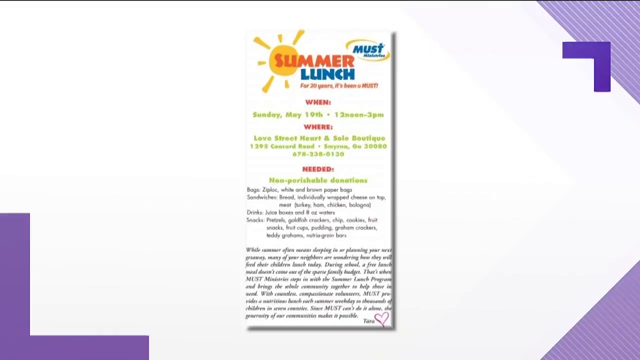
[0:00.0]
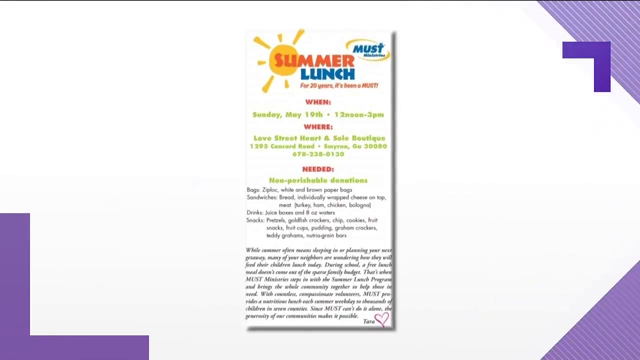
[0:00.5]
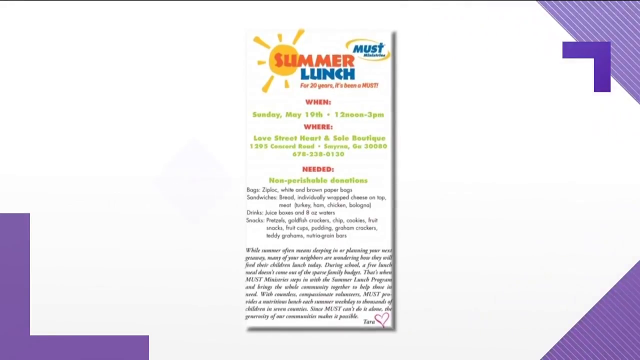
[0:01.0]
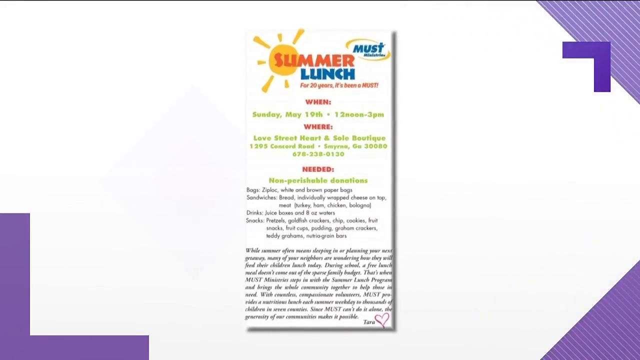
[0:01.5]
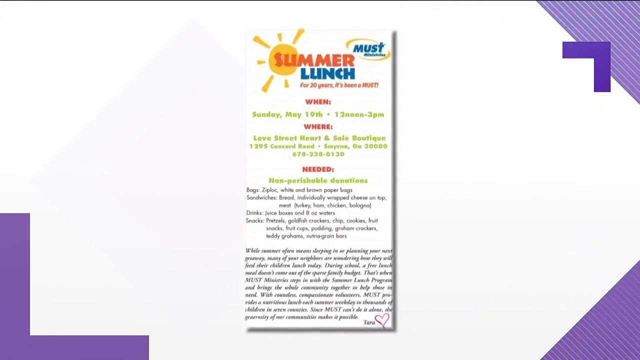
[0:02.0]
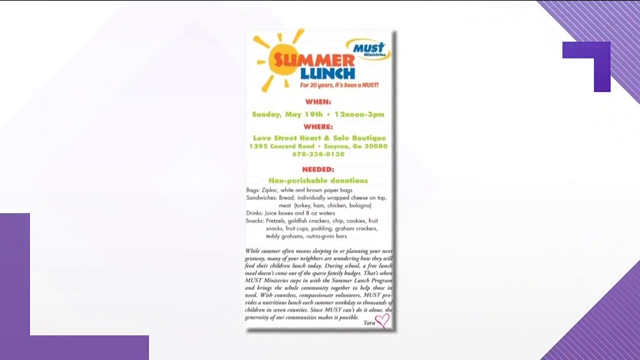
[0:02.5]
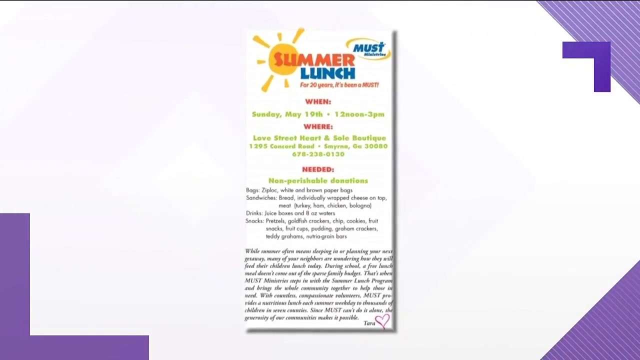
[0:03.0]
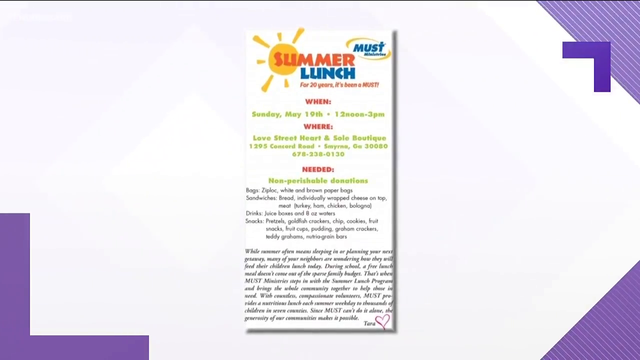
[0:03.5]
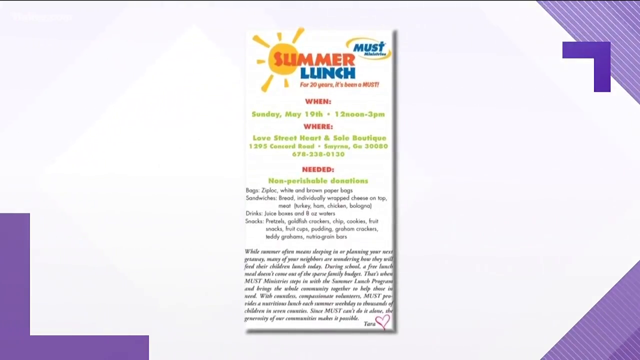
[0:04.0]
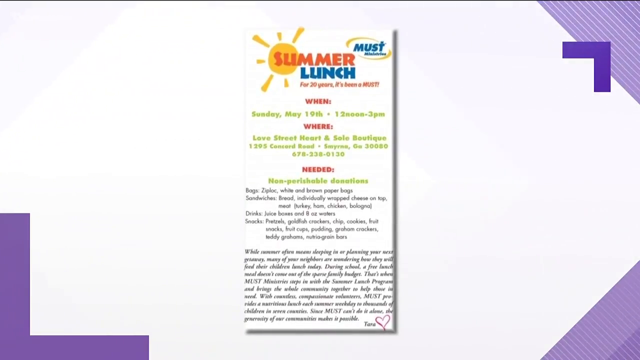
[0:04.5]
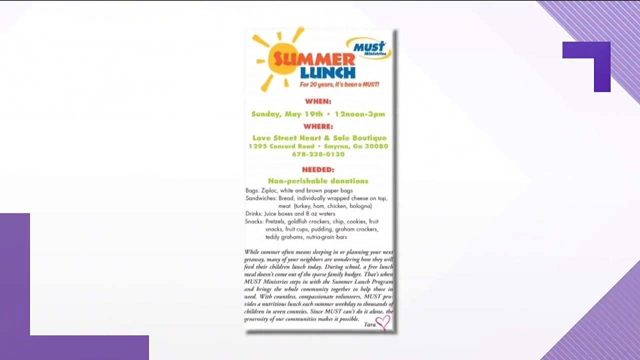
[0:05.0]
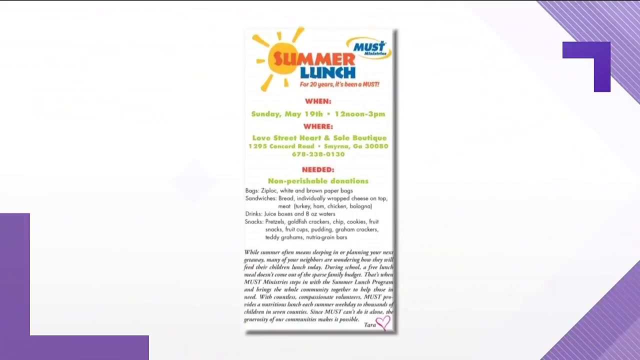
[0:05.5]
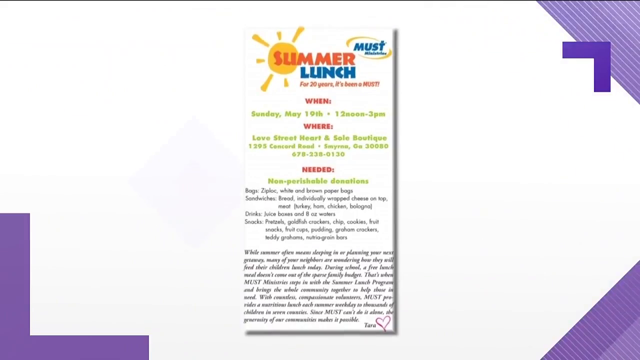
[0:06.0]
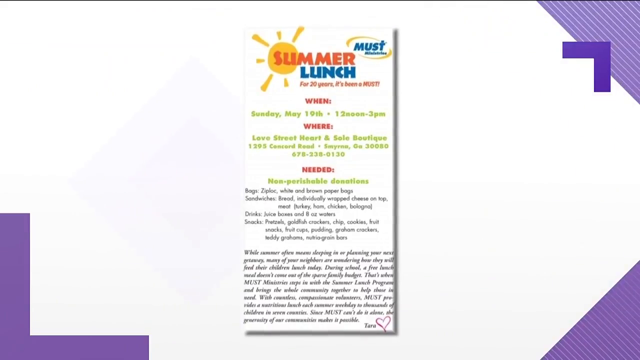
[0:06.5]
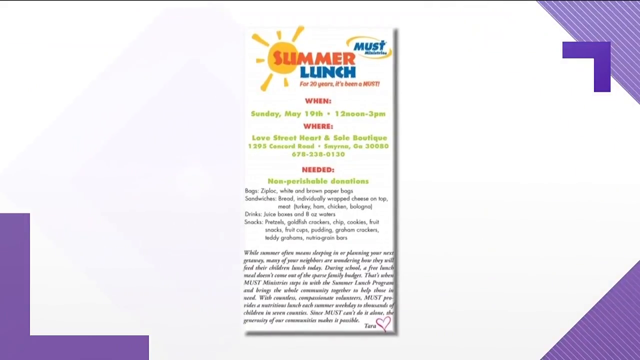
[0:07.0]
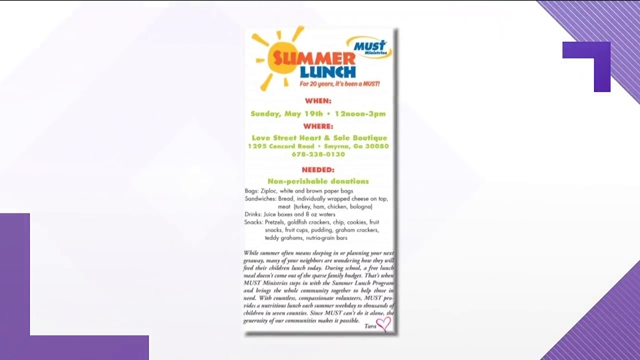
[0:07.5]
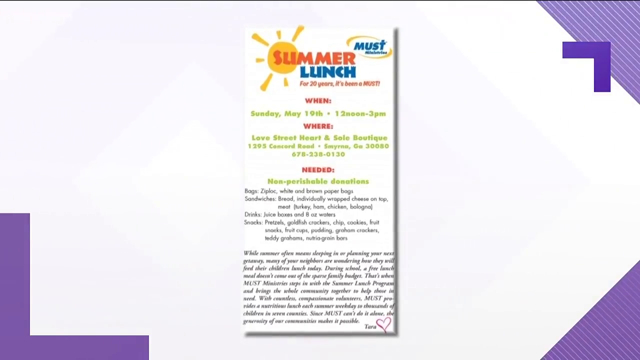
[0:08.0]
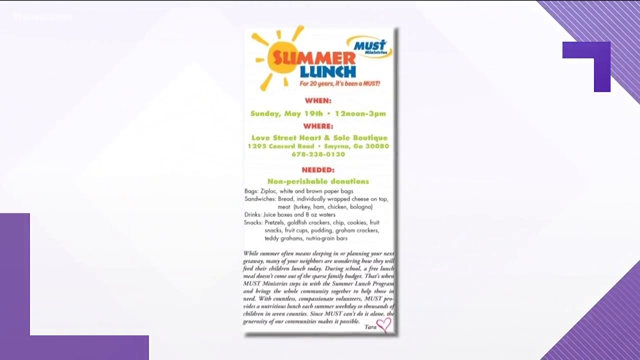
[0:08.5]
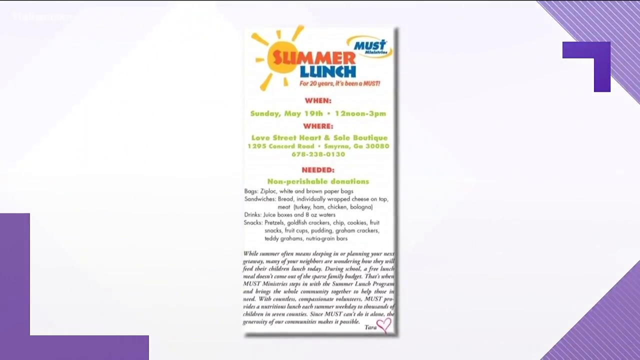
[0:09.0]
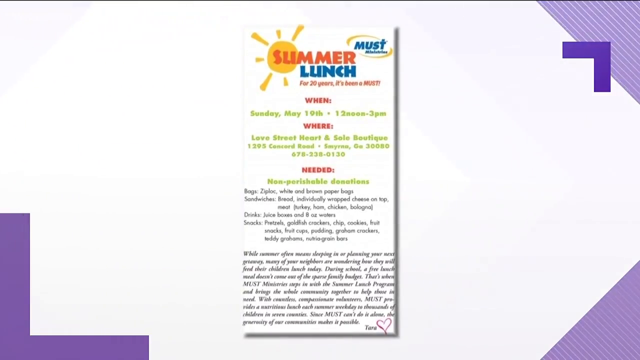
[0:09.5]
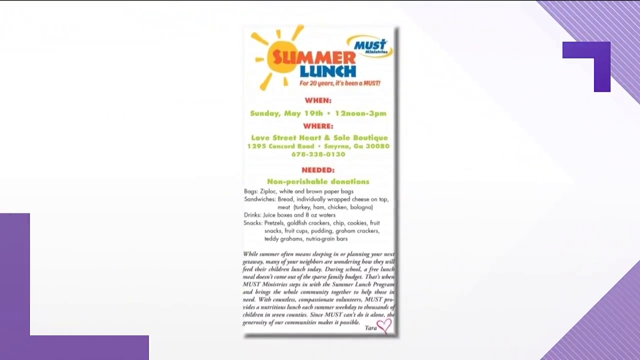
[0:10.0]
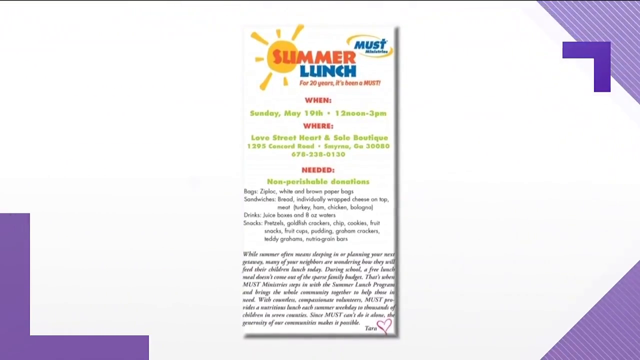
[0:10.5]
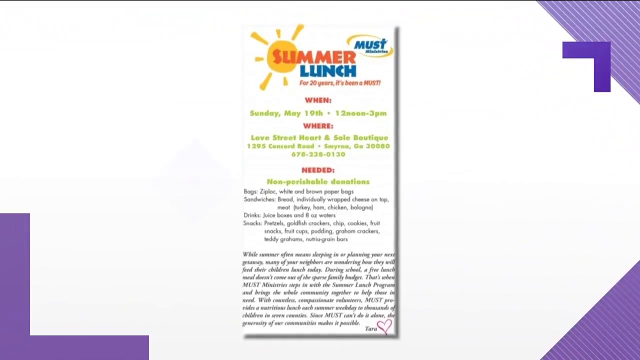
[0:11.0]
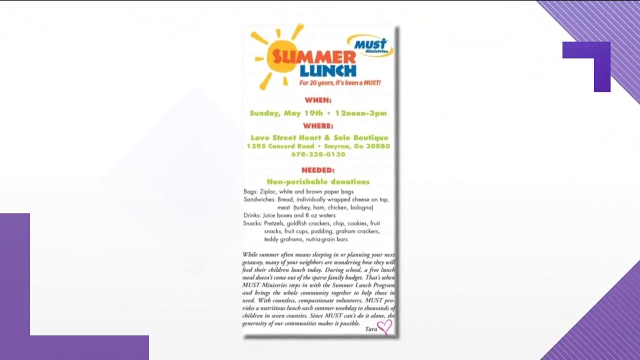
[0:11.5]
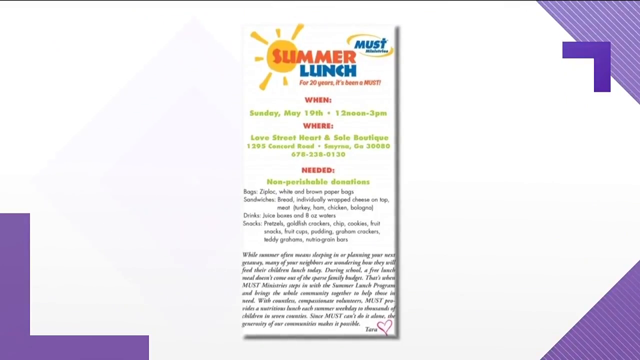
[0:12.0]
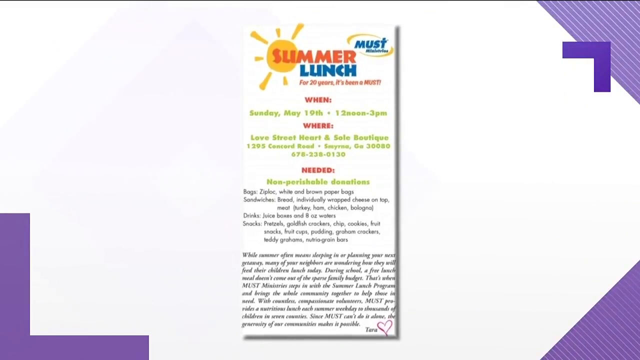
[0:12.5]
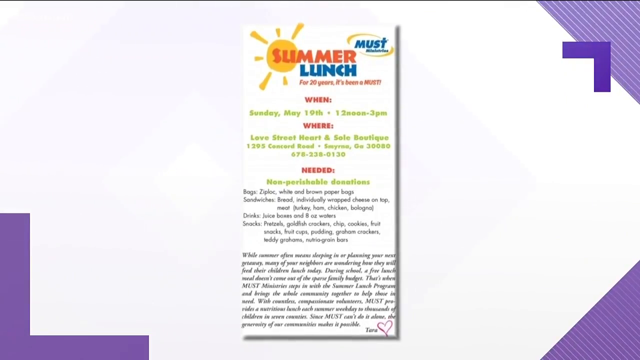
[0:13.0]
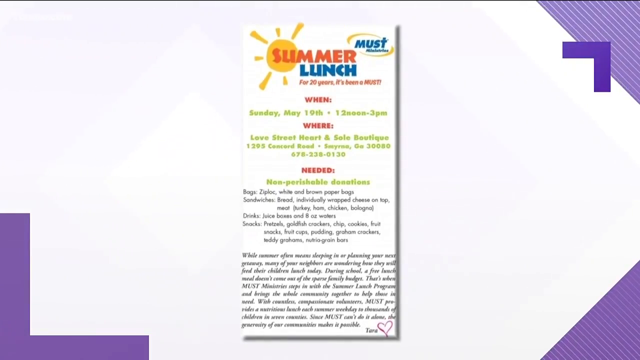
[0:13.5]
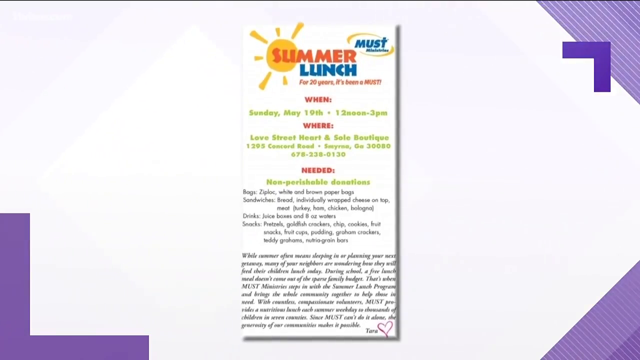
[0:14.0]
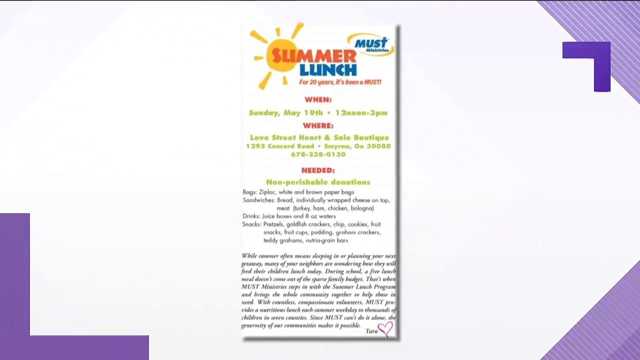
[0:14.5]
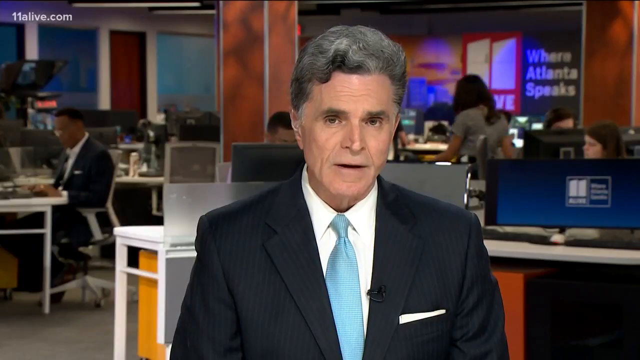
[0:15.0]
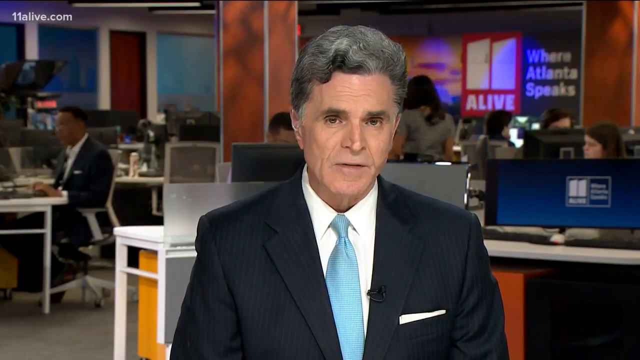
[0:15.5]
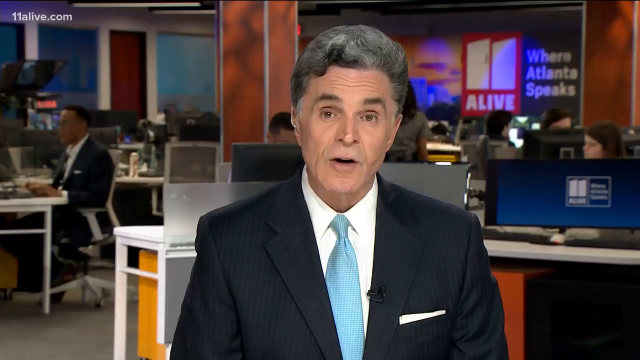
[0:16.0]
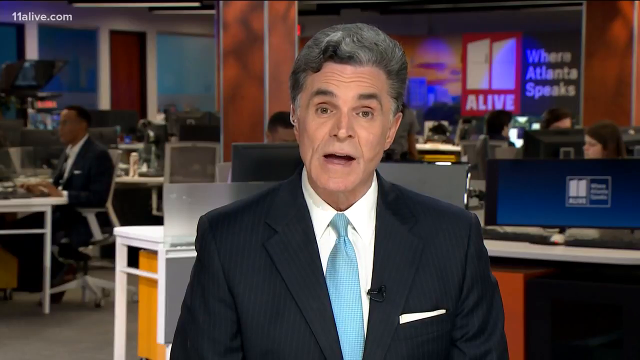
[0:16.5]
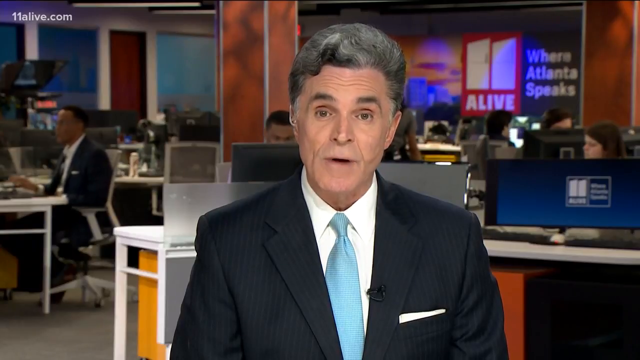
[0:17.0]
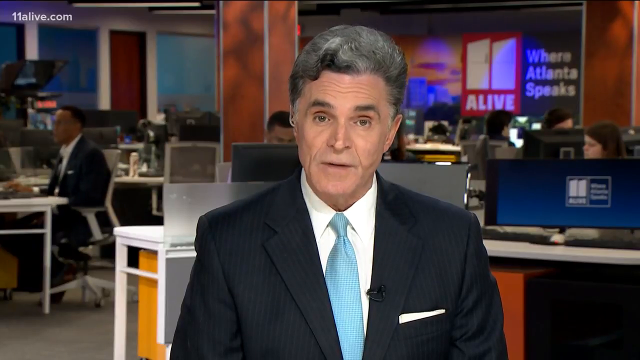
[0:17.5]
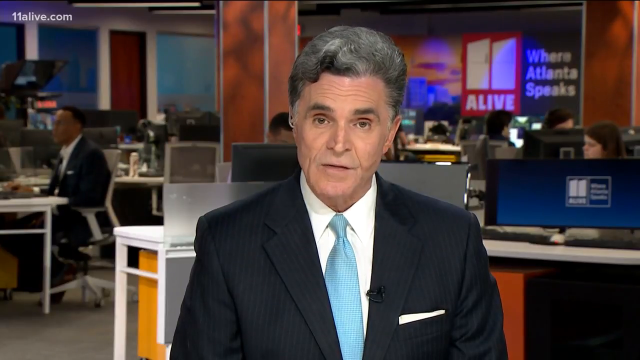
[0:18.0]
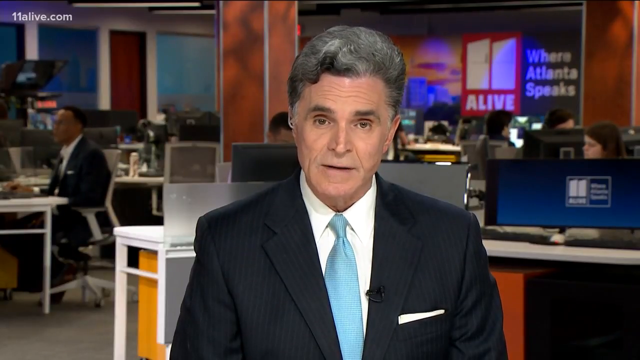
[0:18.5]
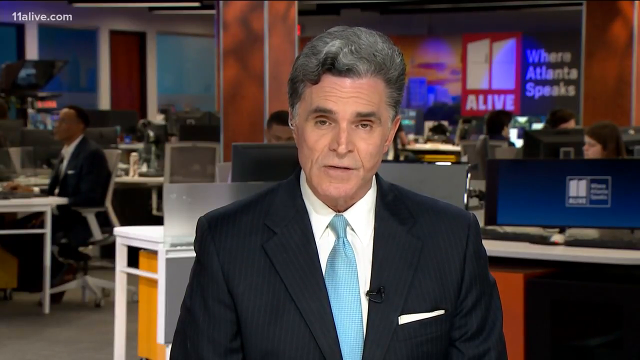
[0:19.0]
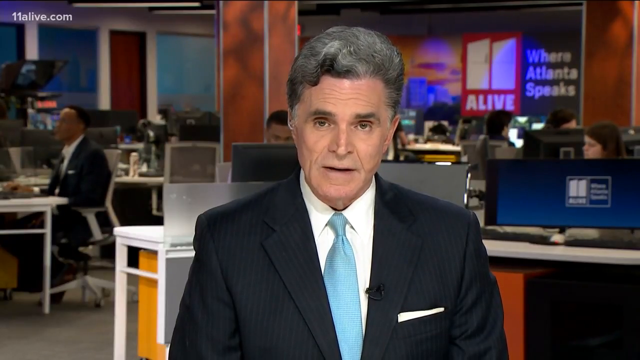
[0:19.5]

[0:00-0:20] A flyer for a Must summer lunch program reads "Summer lunch for 20 years, it's been a must." It lists when: Sunday, May 10th, 12 o'clock noon to 3pm, and where: Love Street Heart and Soul Boutique, 1295 Concord Road. A list of what is needed follows: non-perishable donations; bags (Ziploc, white and brown paper bags); sandwiches (bread, individually wrapped cheese, meat such as turkey, ham, chicken and bologna); drinks (juice boxes and 8-ounce waters); and snacks (pretzels, goldfish crackers, chips, cookies, fruit snacks, fruit cups, pudding, graham crackers, teddy grahams and Nutri-Grain bars).